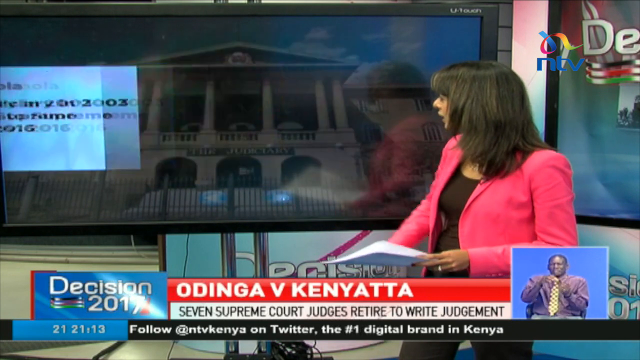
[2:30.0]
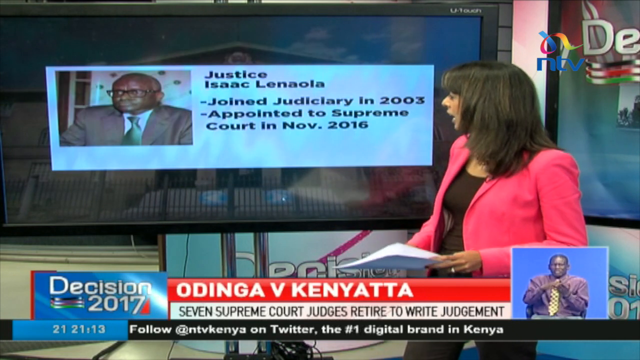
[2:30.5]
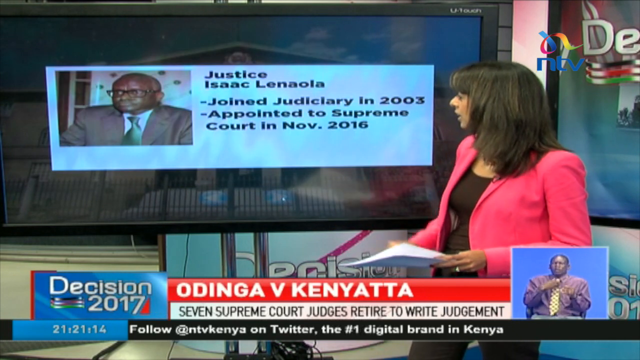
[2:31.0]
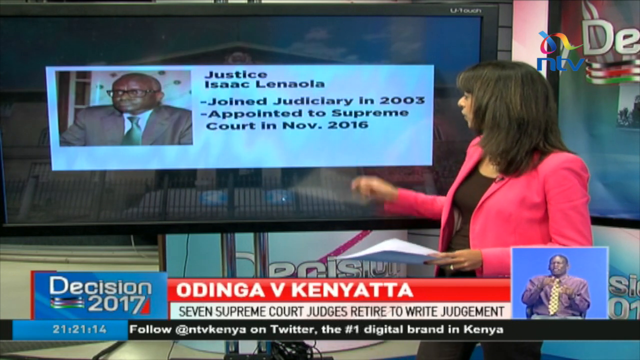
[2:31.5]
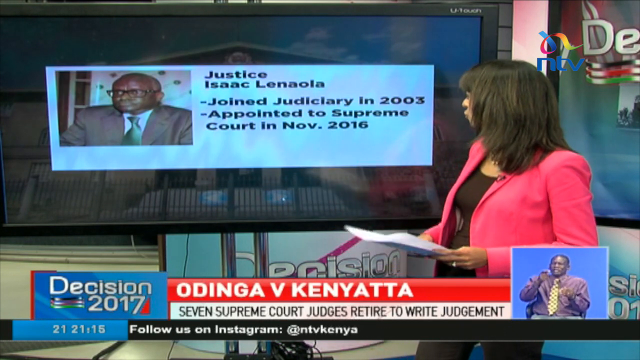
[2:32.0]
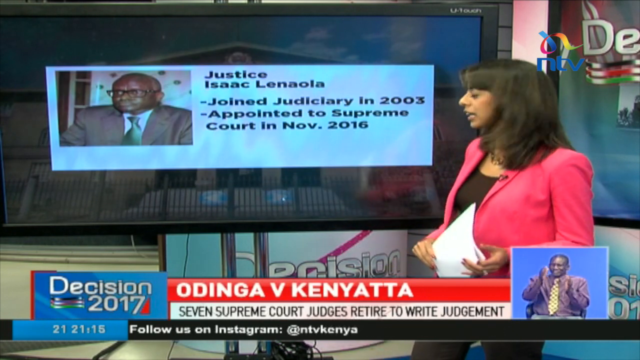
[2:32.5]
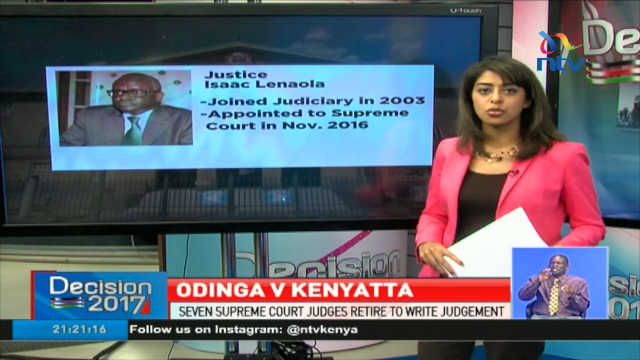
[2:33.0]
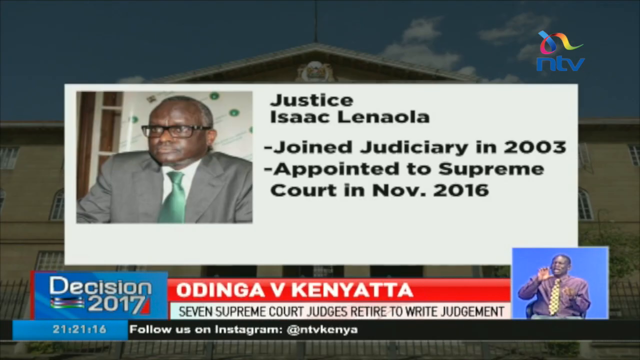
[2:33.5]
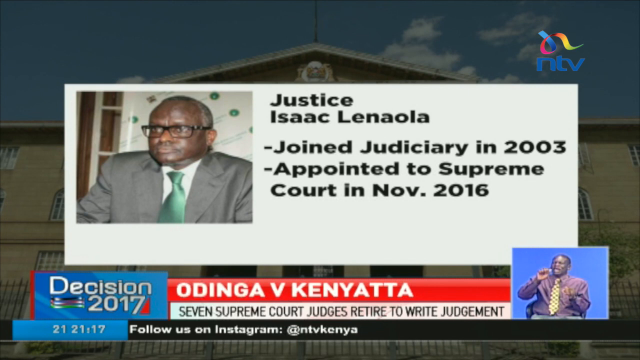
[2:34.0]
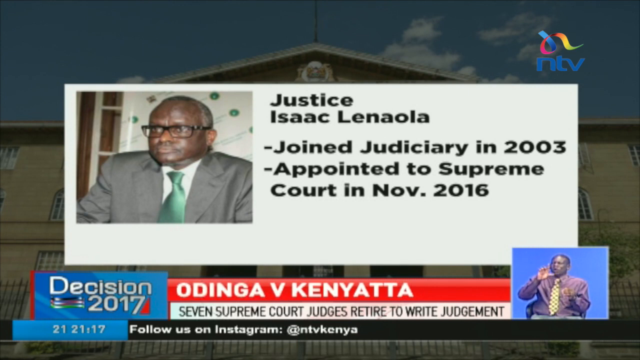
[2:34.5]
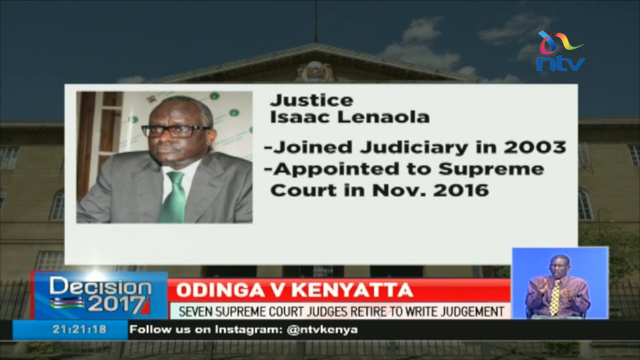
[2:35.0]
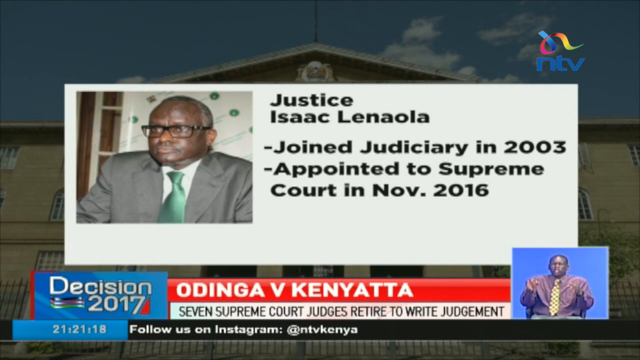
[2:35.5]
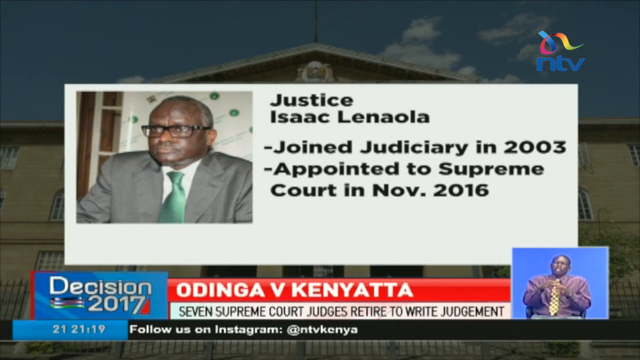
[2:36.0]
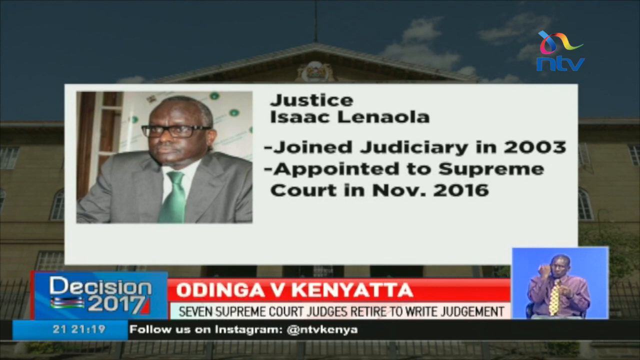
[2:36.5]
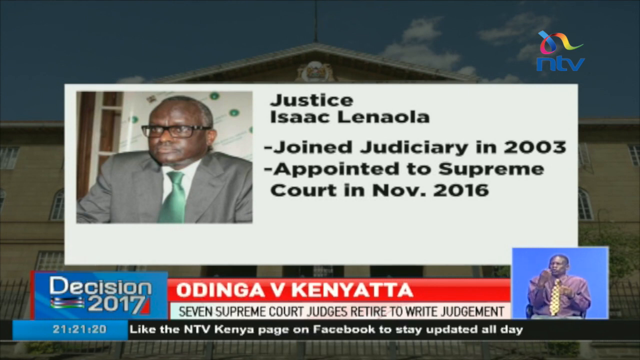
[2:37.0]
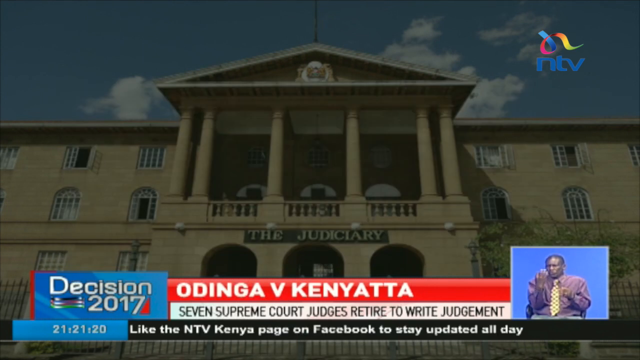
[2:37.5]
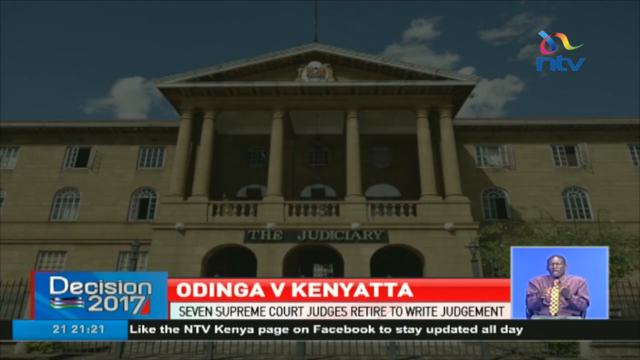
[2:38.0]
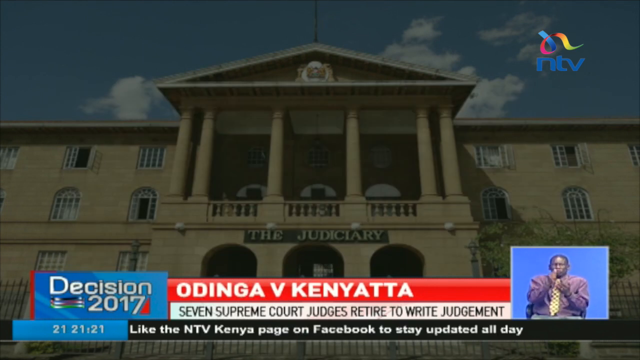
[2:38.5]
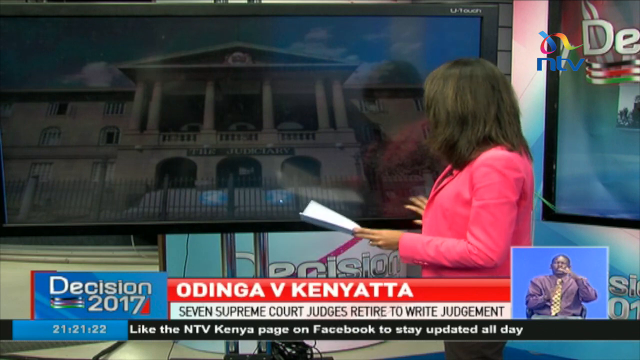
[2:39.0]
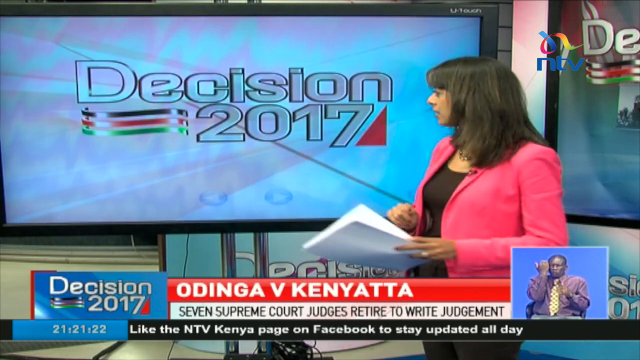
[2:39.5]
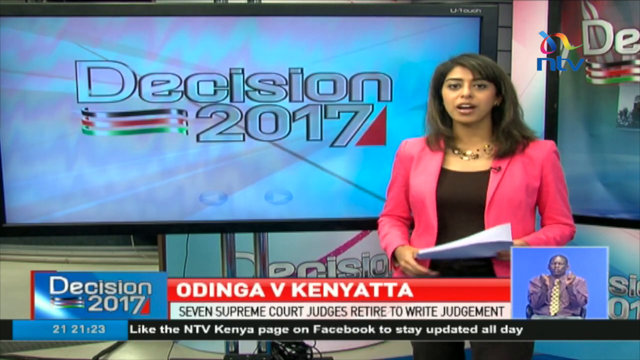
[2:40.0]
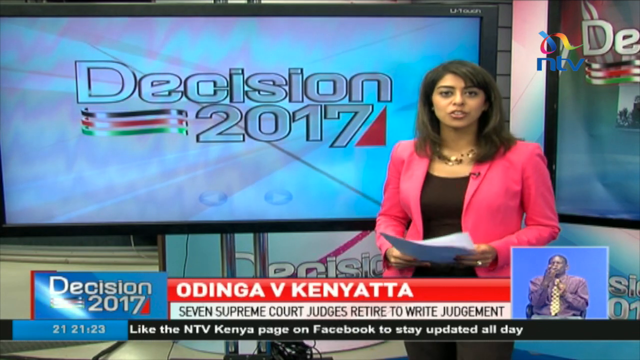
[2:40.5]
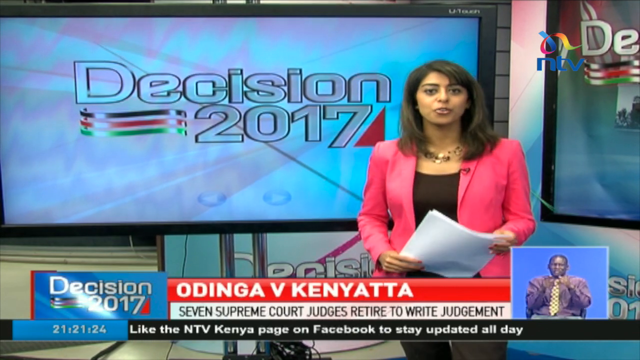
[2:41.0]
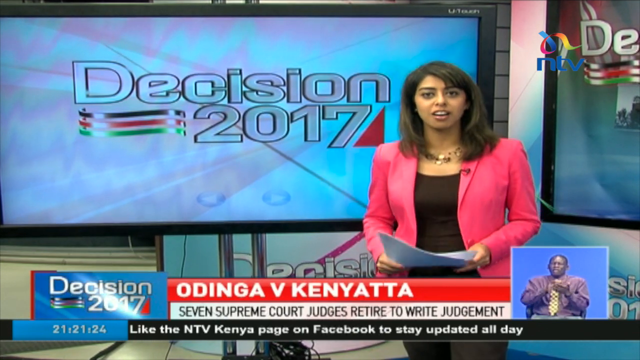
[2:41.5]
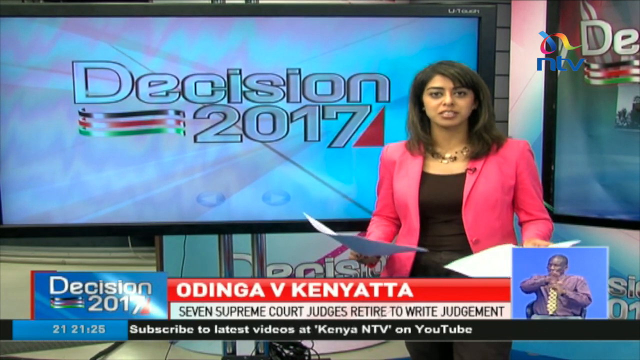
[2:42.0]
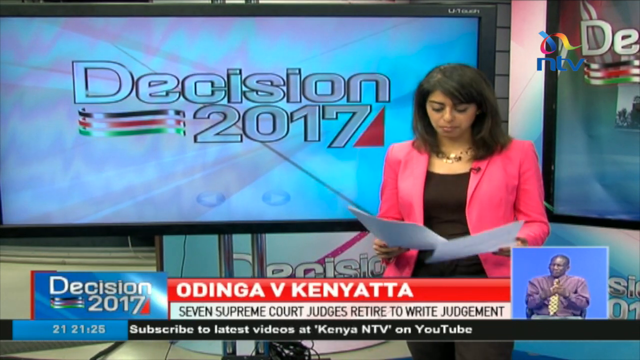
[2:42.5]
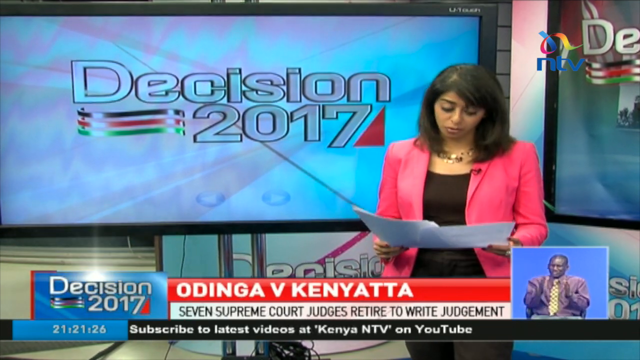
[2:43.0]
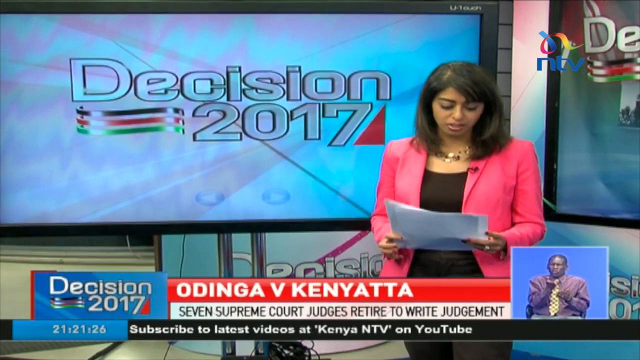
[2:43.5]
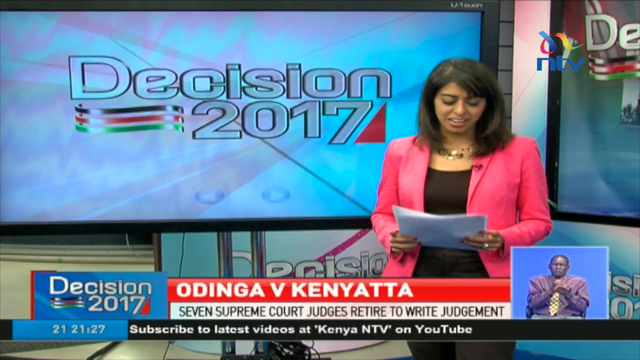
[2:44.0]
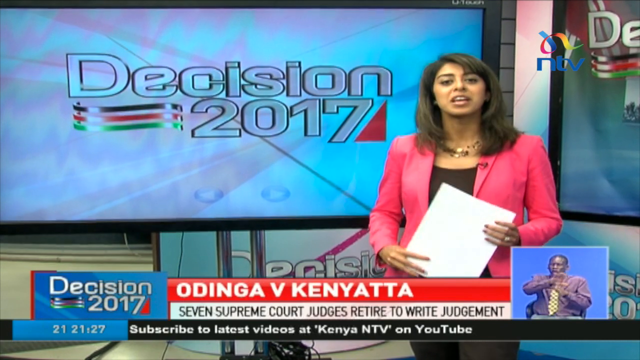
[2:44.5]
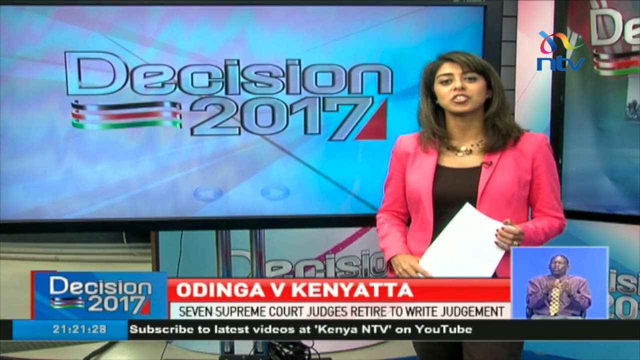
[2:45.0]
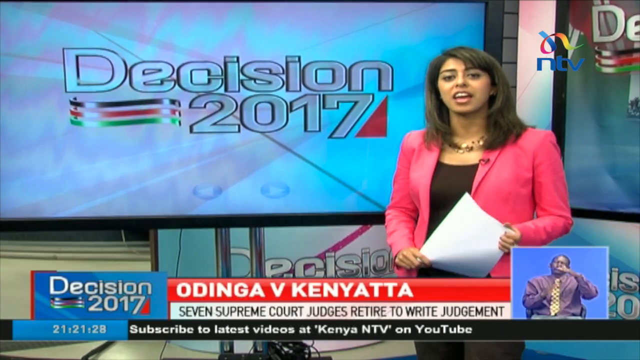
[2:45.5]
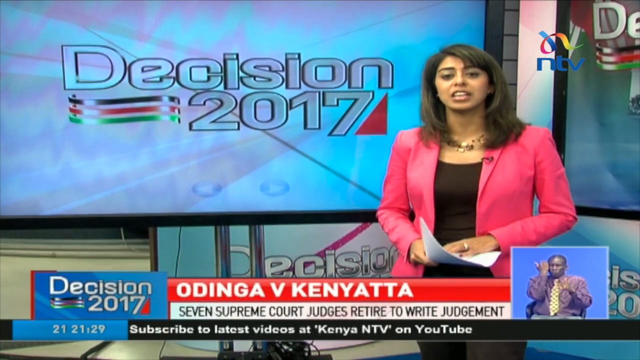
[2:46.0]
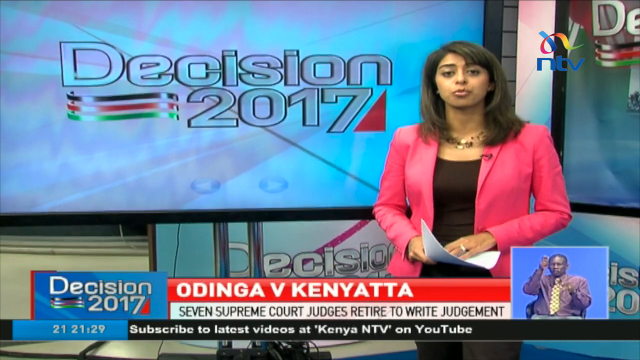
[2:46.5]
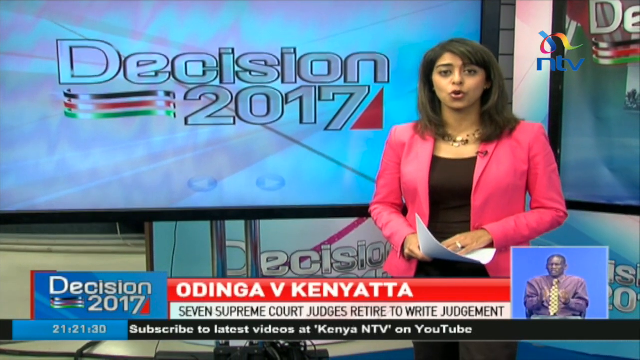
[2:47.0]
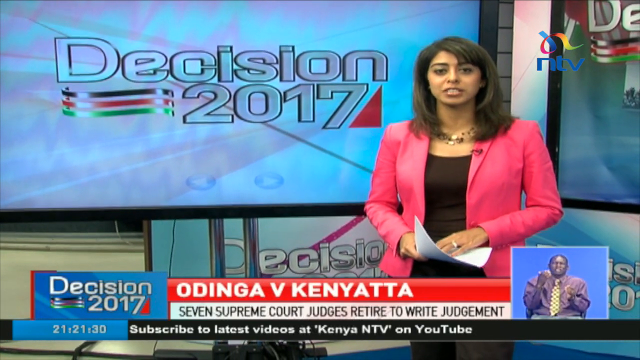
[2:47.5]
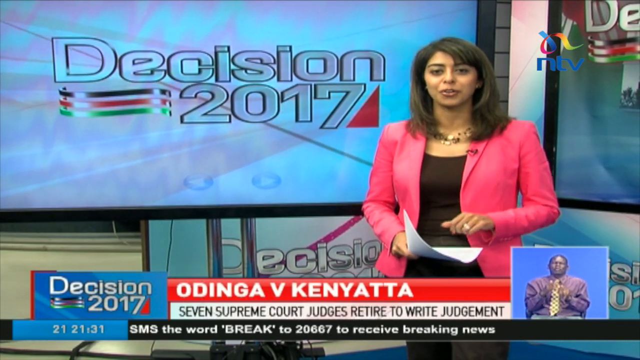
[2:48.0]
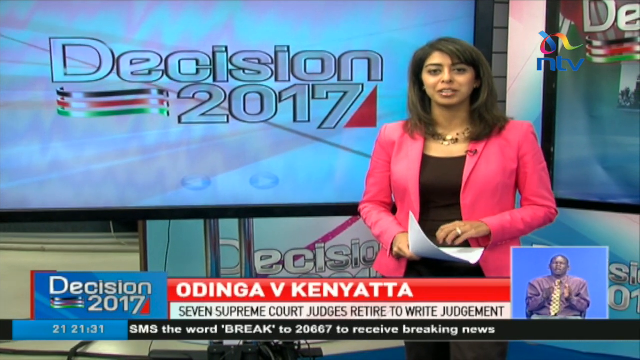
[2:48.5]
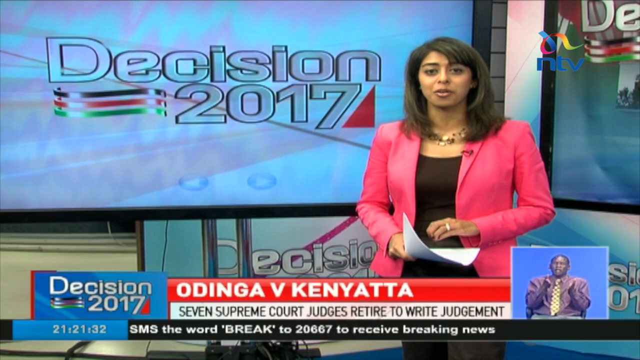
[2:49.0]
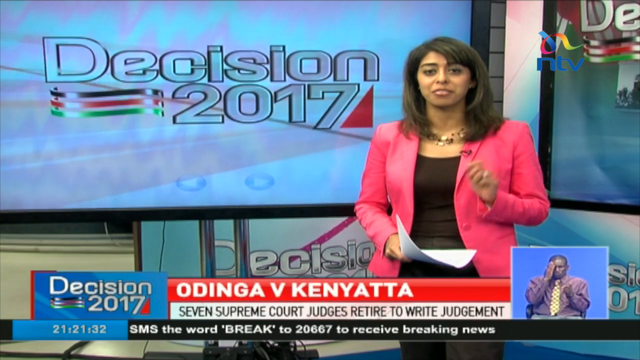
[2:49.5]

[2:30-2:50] A female reporter stands in front of a wide TV screen that has just changed images: a black background with a white horizontal rectangular box. On the left is a picture of an older African man in a gray suit, white button-up shirt, and green tie, wearing black-framed glasses. To the right of his image it says "Justice Isaac Lanaola," with two bullet points: "Joined judiciary in 2003" and "Appointed to Supreme Court in November 2016." The woman kind of speaks while looking at the screen, kind of points at the image, and turns back toward the camera. The image of Justice Isaac Lanaola in the white box with the two bullet points is then blown up full screen, apparently overlaying a background that looks like a large white building of some sort, maybe a courthouse. The view returns to the reporter in front of the screen. She presses a button in the bottom right-hand corner of the screen, and a white and blue background appears with large text in the middle reading "Decision 2017" and a small image that looks like three waving lines in the Kenyan flag colors. The woman speaks, kind of separating her papers so she holds papers in both hands, looks down at the paper to read something, then looks back up at the camera and continues speaking.